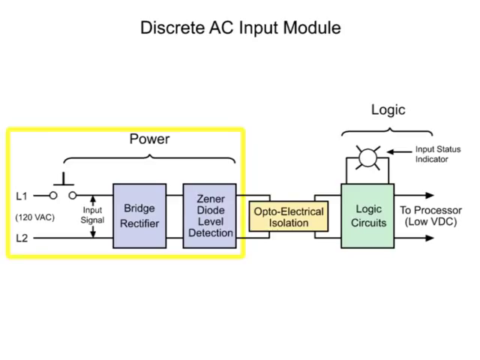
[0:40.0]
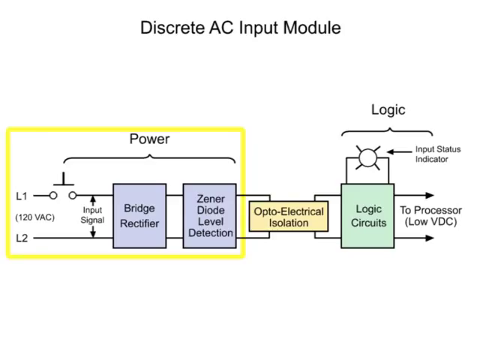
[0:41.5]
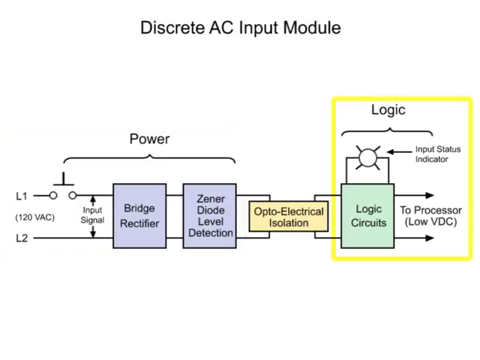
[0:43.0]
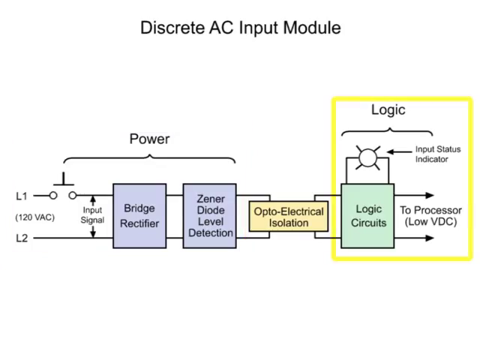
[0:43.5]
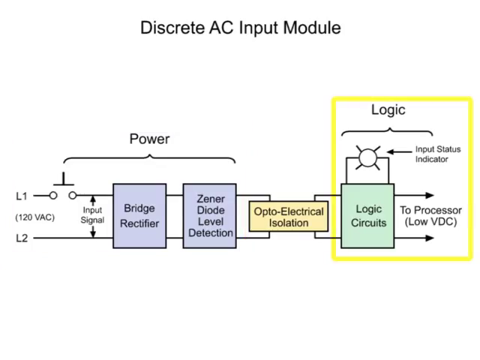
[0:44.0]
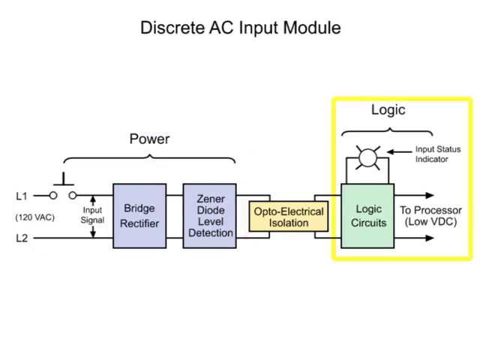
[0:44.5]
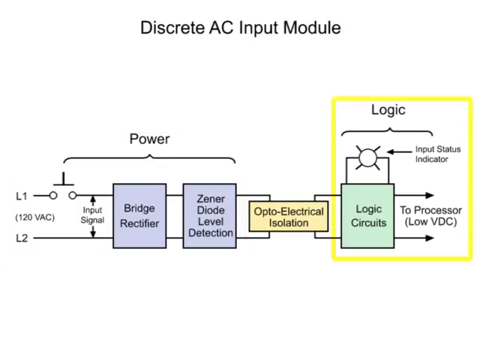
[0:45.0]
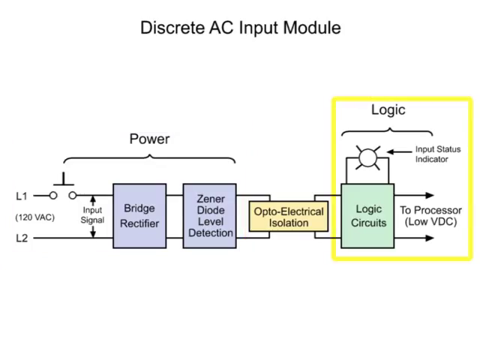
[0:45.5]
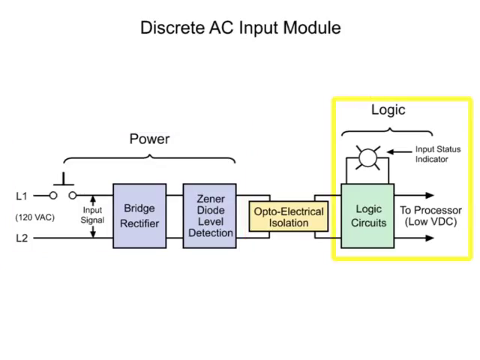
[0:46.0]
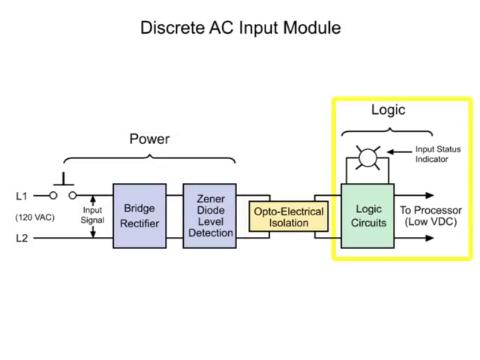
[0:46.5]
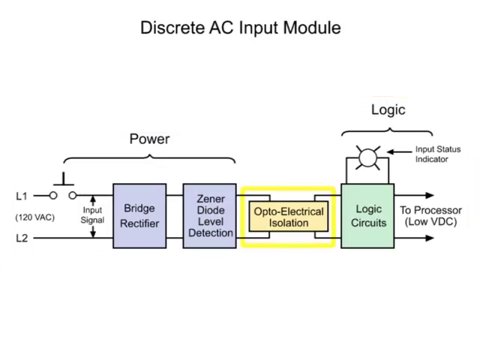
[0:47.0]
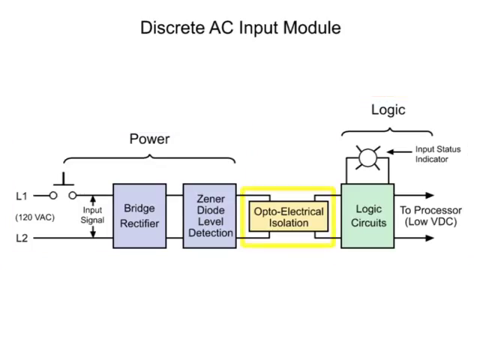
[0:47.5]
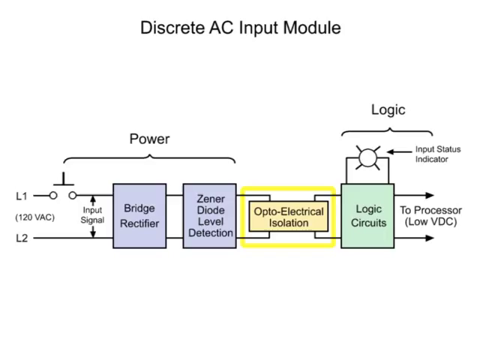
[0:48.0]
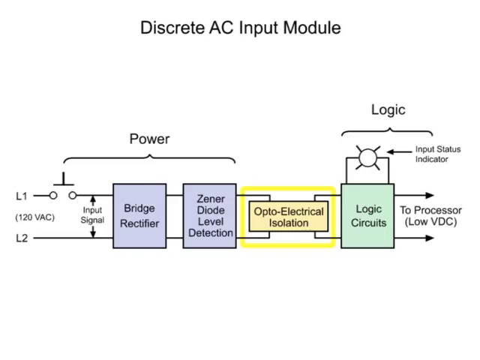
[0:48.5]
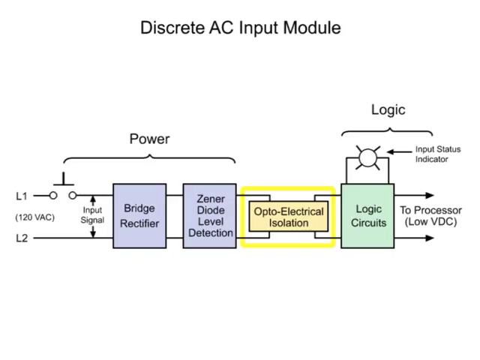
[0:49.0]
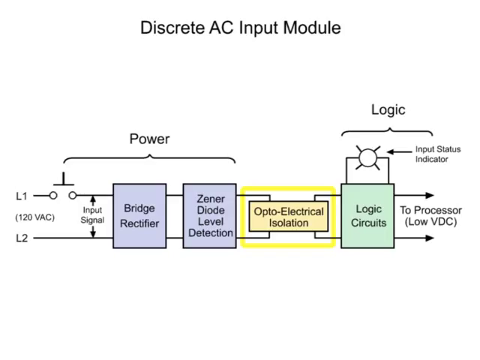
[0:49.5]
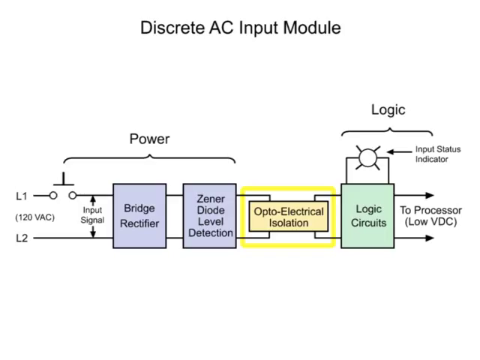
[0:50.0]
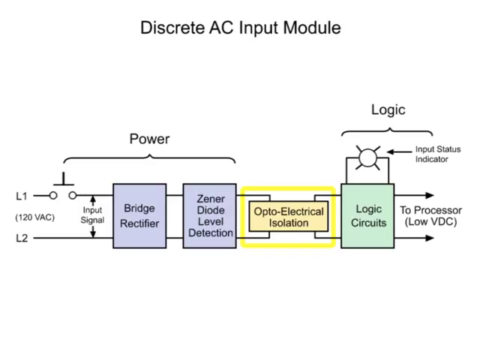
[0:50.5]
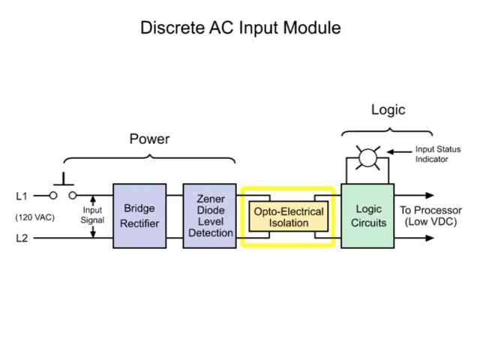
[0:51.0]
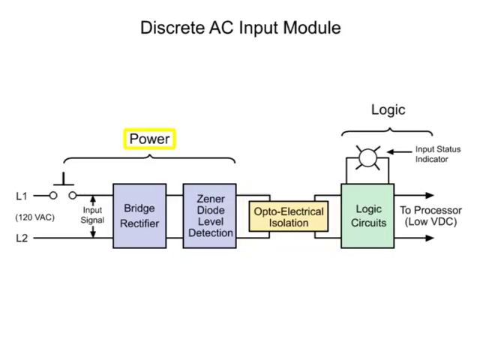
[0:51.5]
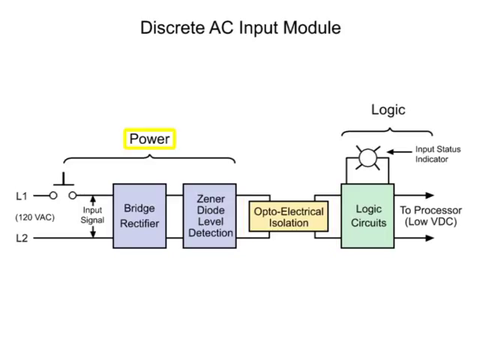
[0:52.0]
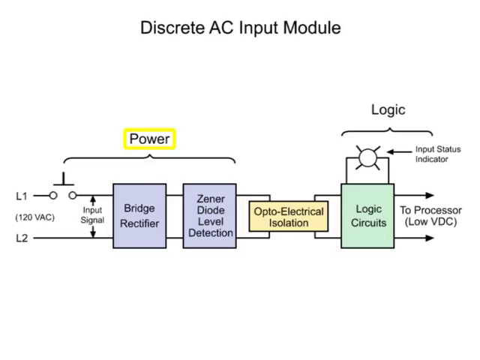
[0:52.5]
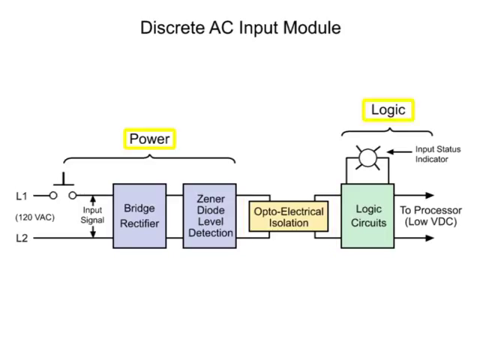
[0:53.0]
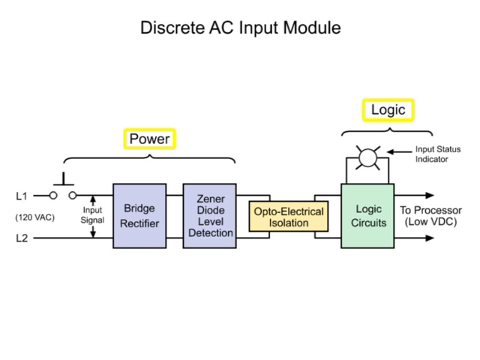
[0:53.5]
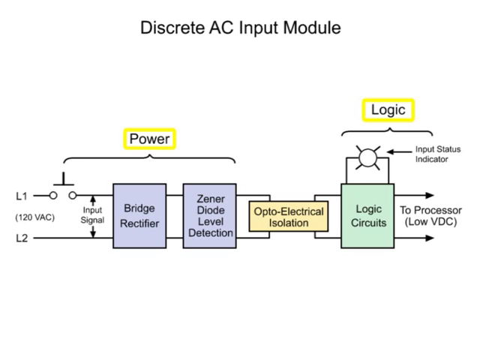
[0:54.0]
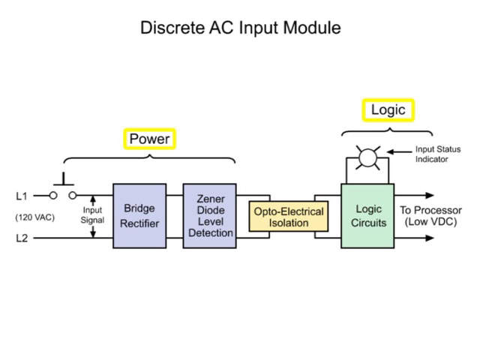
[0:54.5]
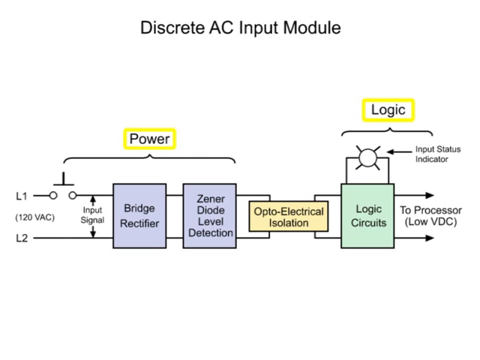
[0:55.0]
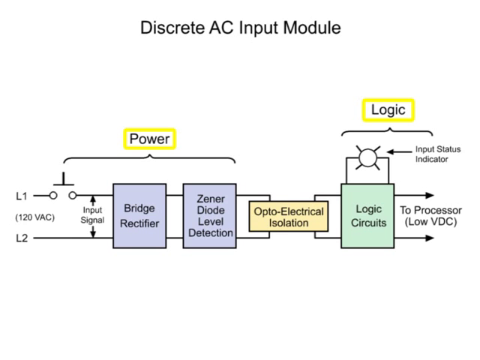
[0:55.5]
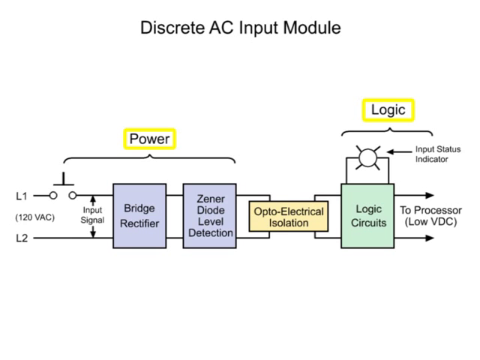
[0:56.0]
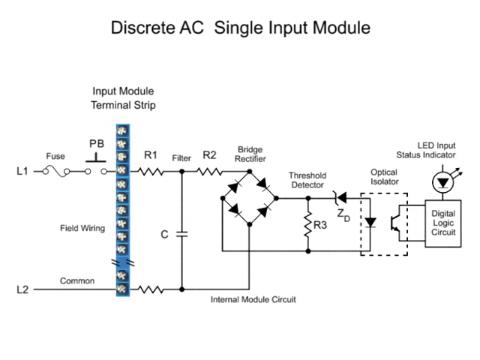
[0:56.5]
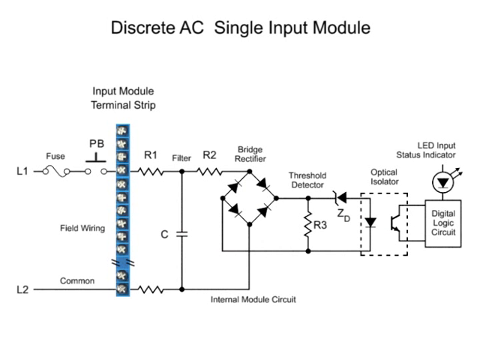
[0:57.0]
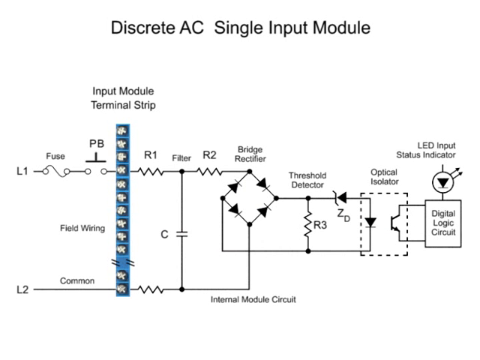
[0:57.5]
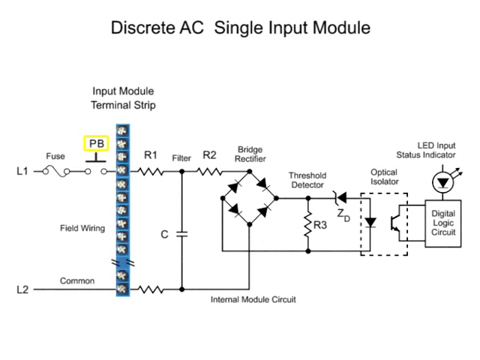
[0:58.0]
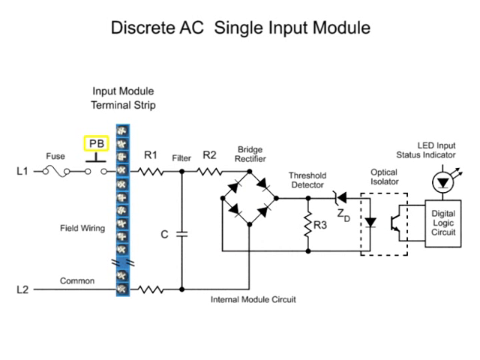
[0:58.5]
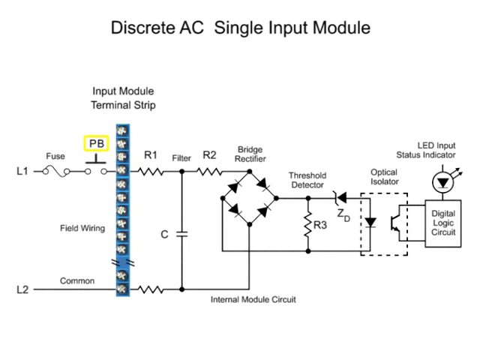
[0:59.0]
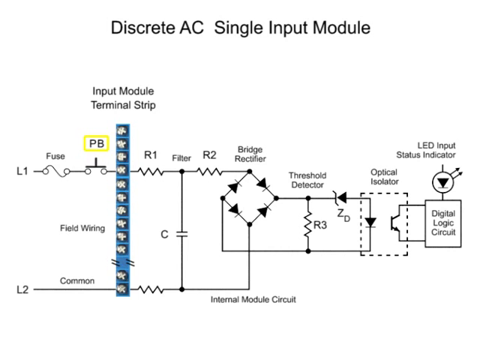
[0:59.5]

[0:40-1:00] The video moves on to a discrete AC input module, showing its breakdown. Power and logic are highlighted, followed by a breakdown of the input module terminal strip, with a fuse, field wiring, a PB, a filter, R1 (resistor 1), resistor 2, a bridge rectifier, a threshold detector, an optical isolator, an LED input status indicator and a digital logic circuit. All of this falls under the discrete AC single input module, and the internal module circuit is shown, broken down from the input module.